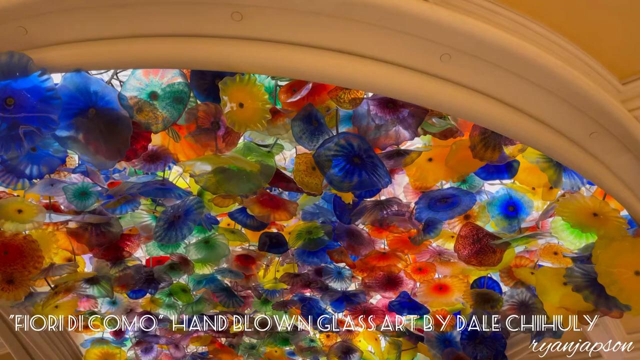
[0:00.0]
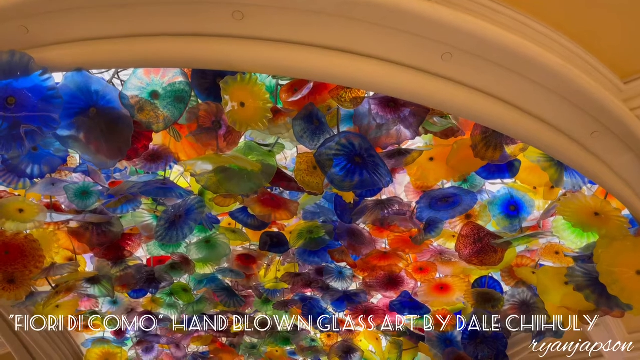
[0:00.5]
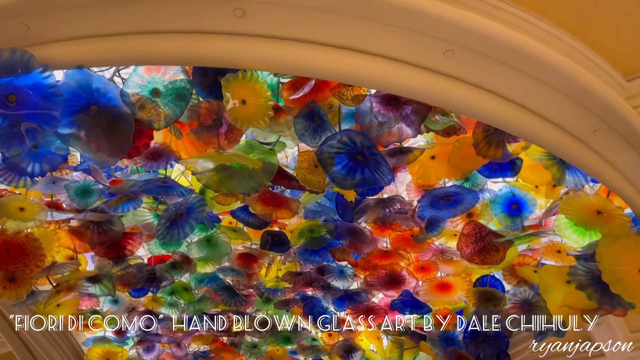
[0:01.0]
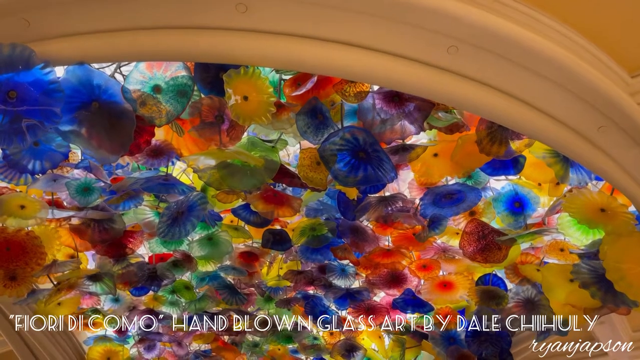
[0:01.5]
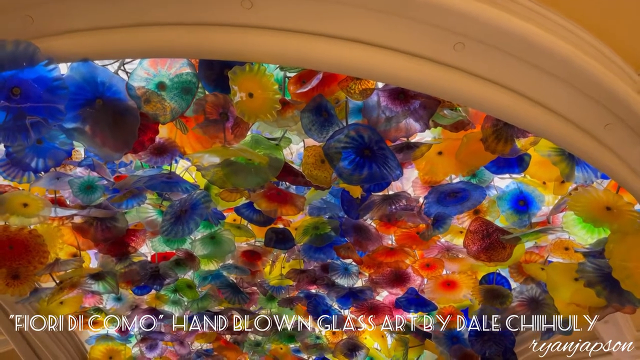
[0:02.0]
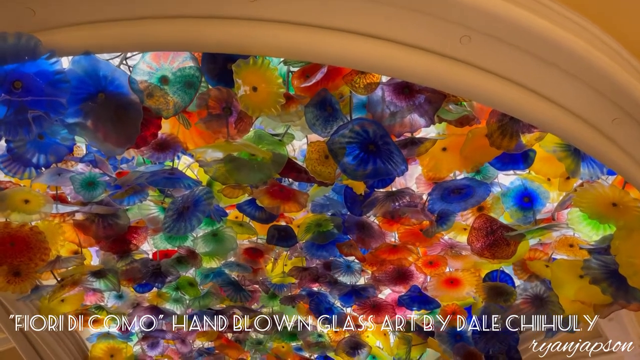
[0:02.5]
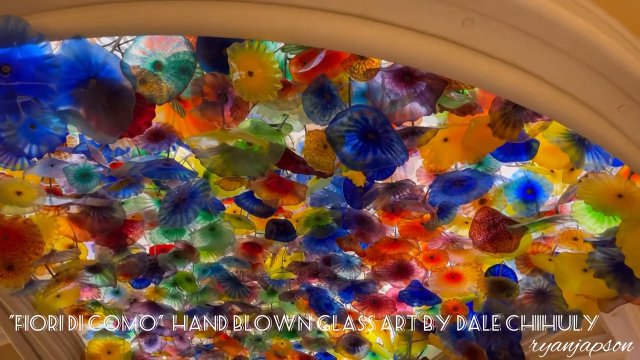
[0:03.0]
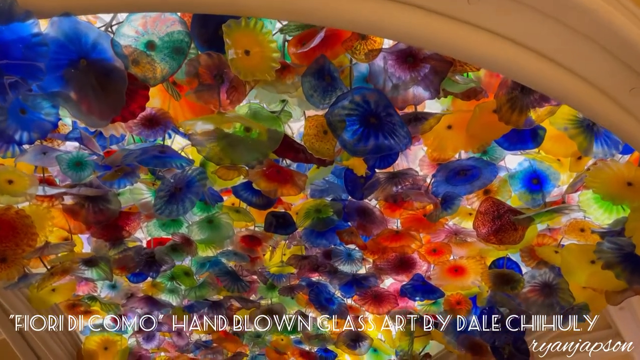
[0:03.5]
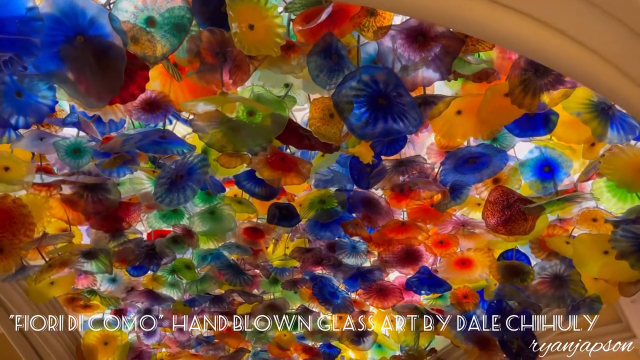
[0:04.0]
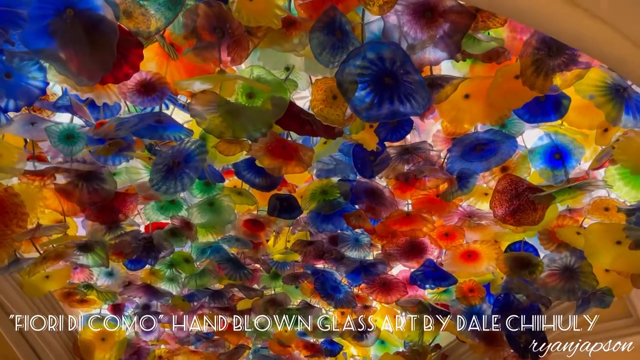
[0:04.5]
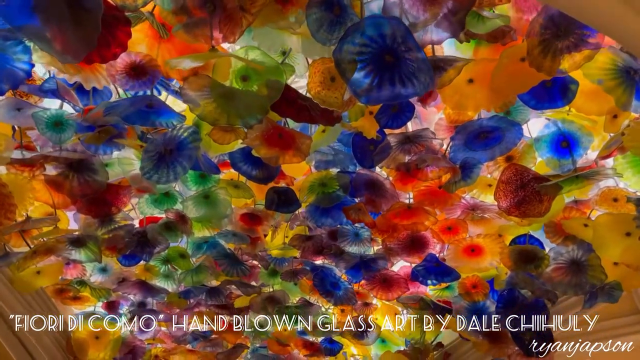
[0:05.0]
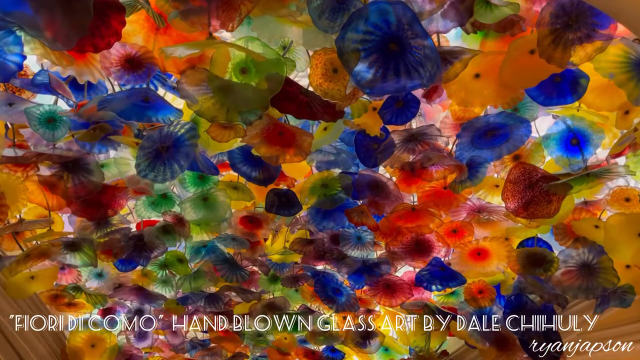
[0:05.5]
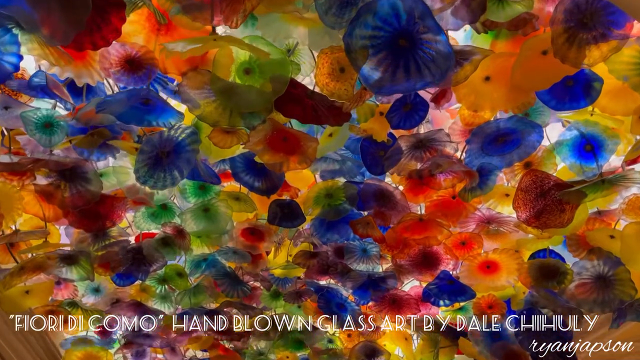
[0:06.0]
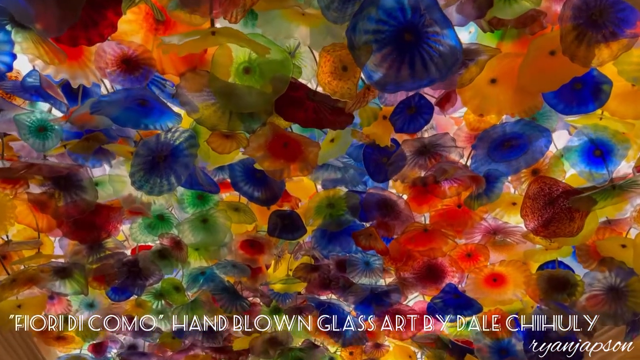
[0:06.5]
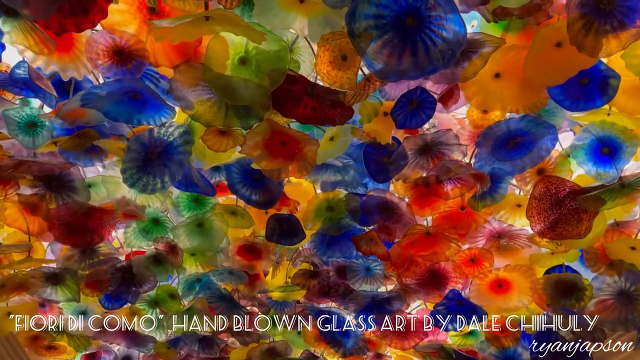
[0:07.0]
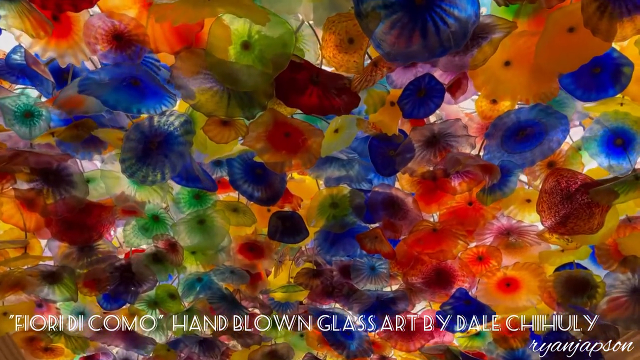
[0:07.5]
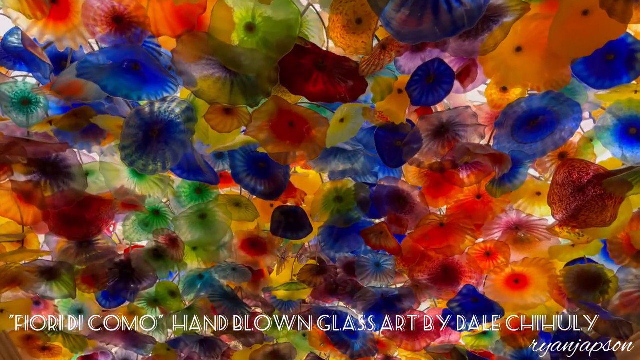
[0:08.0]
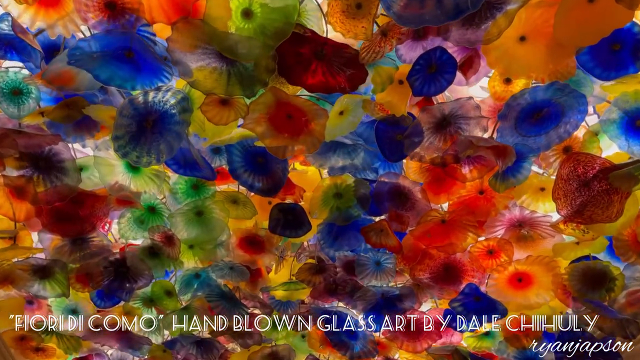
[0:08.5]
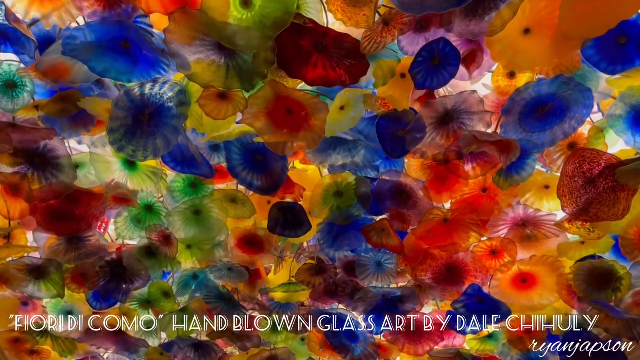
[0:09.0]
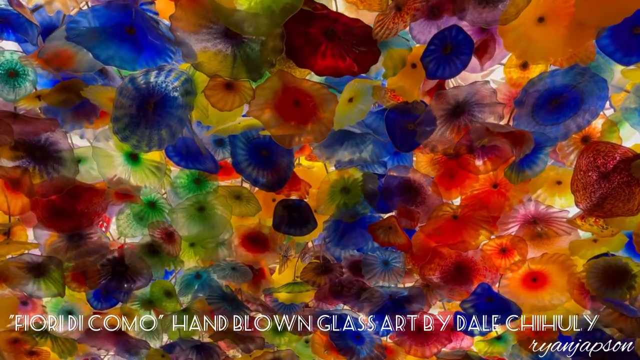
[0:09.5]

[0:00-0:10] Brightly colored objects that almost look like flowers lie inside a tannish round object. Toward the very back there appears to be a darker tan-yellow area with molding on it. The round object starts at the lower right corner and extends up off the picture to the left and the top. The multicolored pieces are Flora de Coma hand-blown glass art by Shilu R. Thompson. They are blue, orange, yellow and green, sort of layered on top of each other, and almost flower-like in shape. They are translucent.